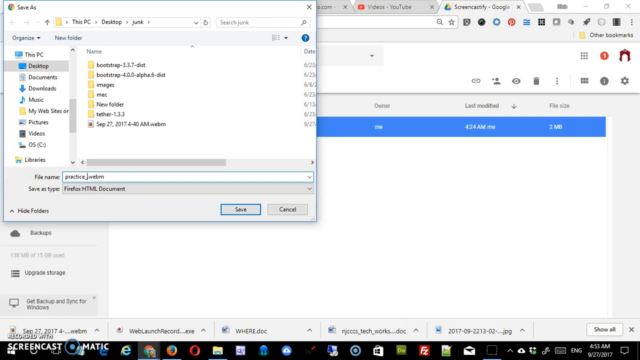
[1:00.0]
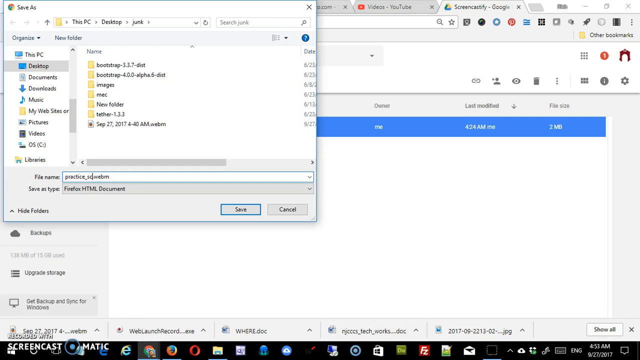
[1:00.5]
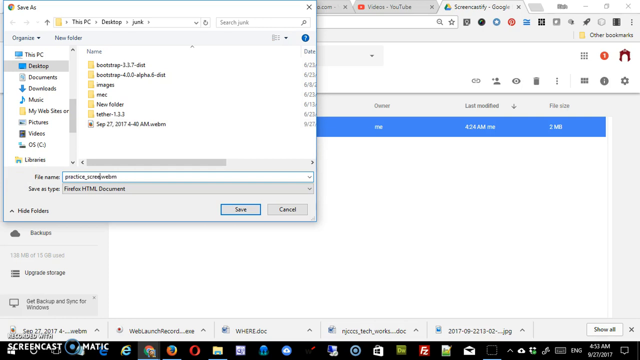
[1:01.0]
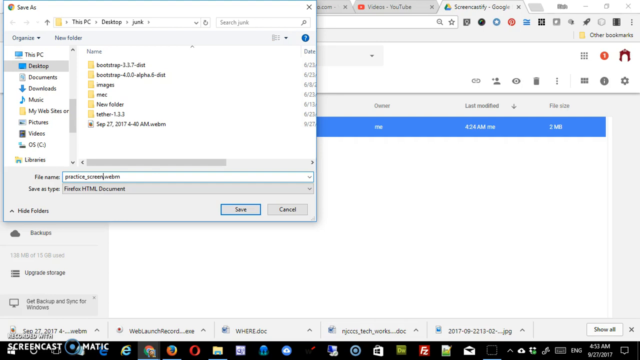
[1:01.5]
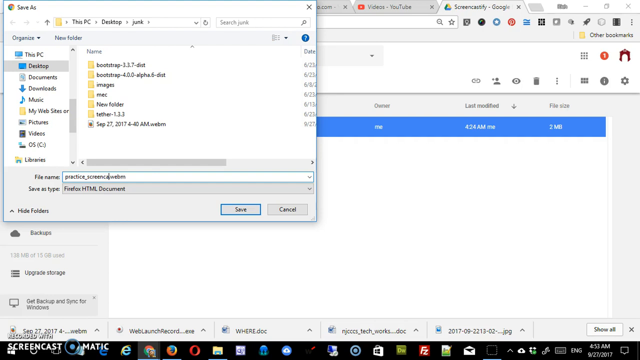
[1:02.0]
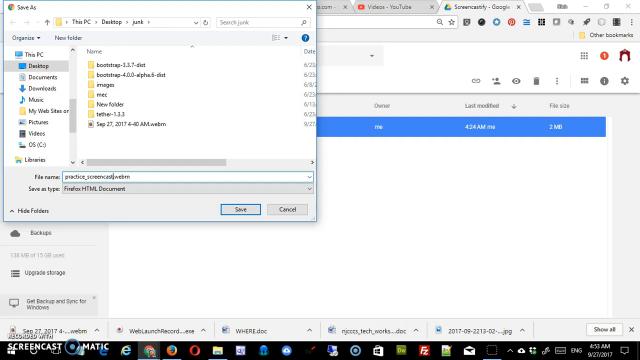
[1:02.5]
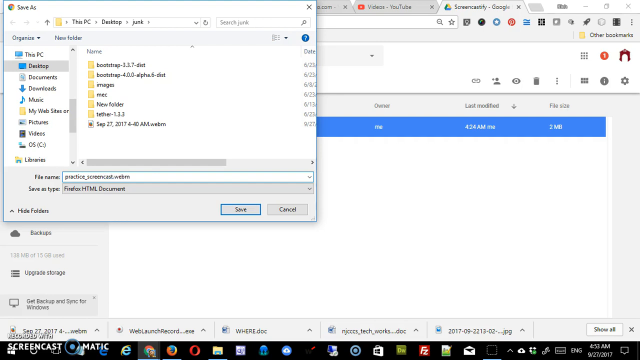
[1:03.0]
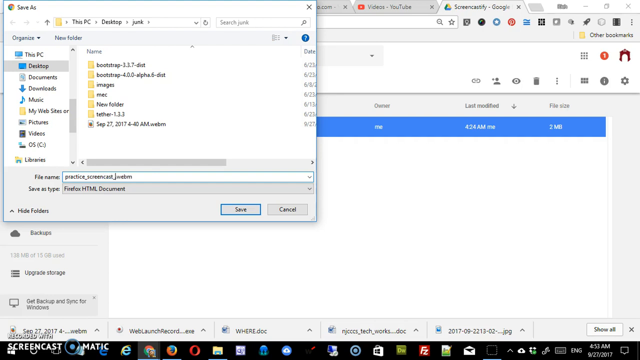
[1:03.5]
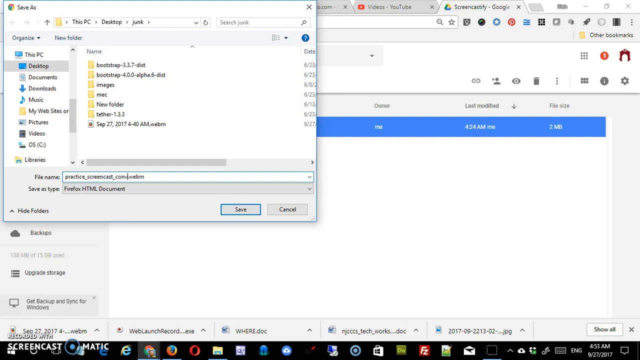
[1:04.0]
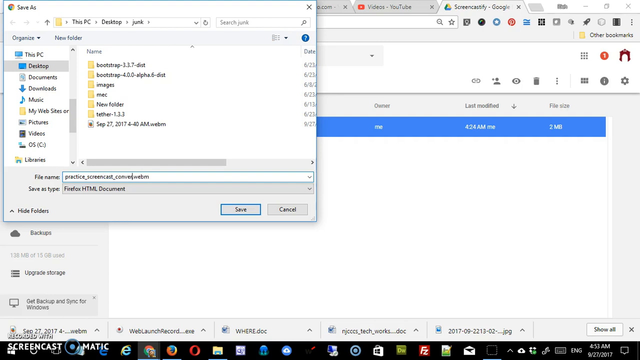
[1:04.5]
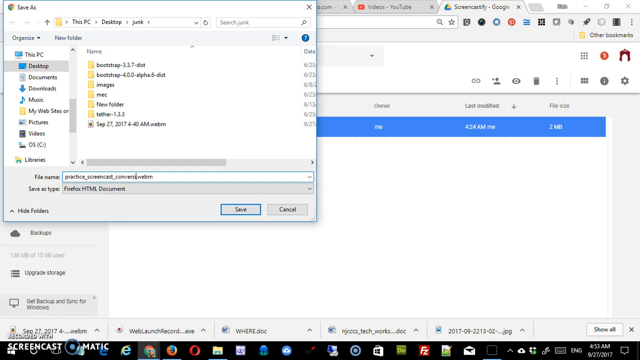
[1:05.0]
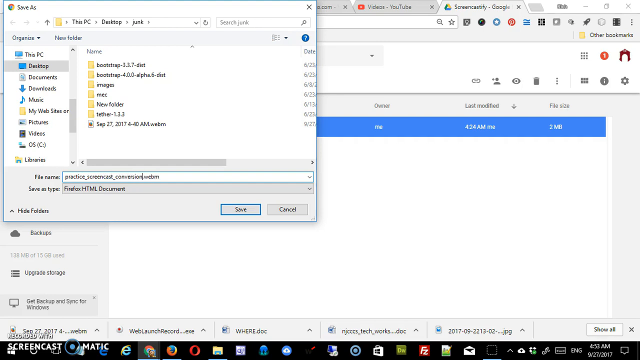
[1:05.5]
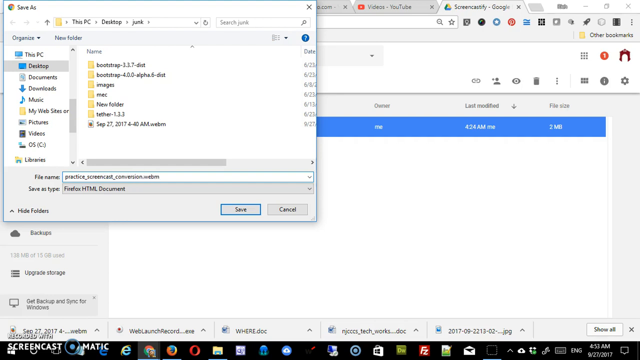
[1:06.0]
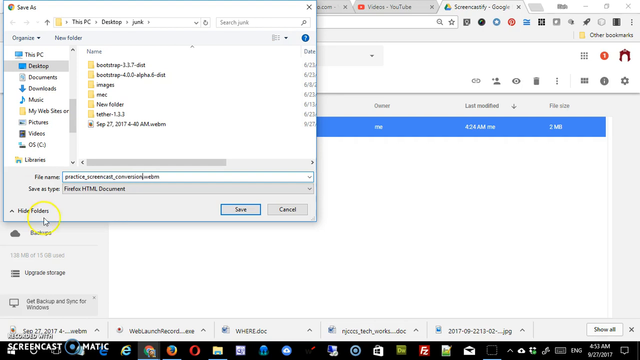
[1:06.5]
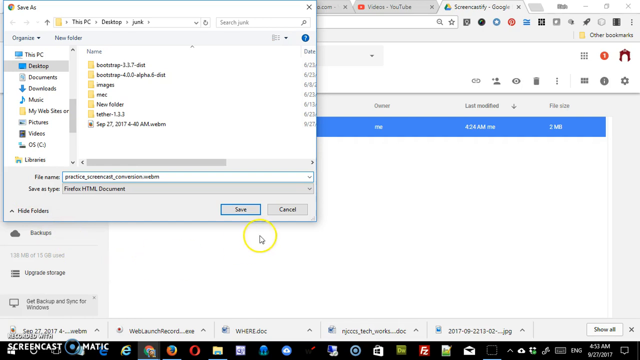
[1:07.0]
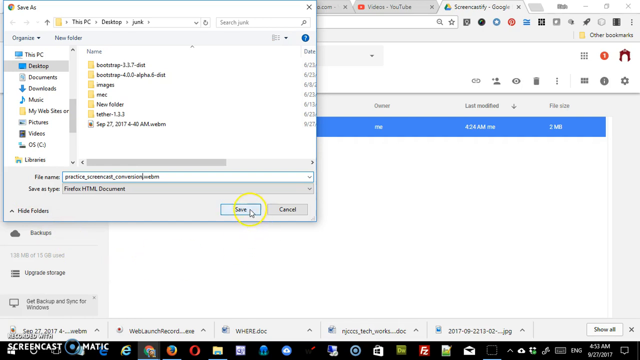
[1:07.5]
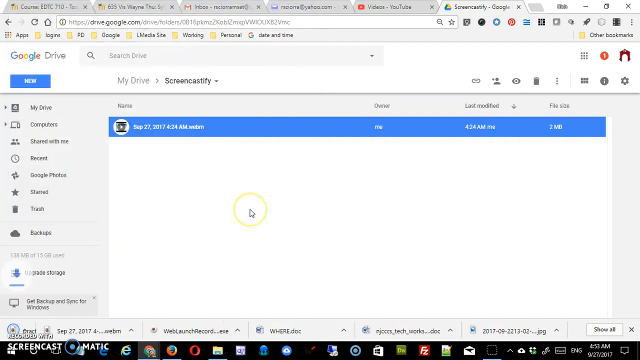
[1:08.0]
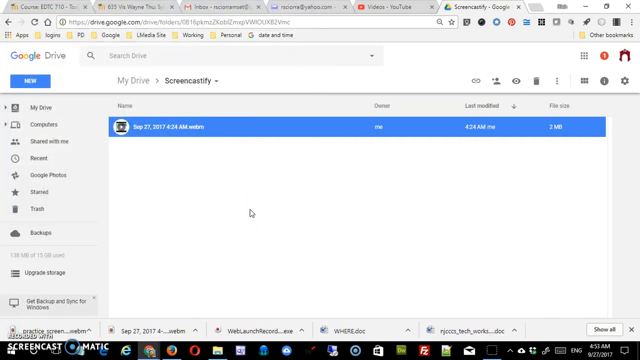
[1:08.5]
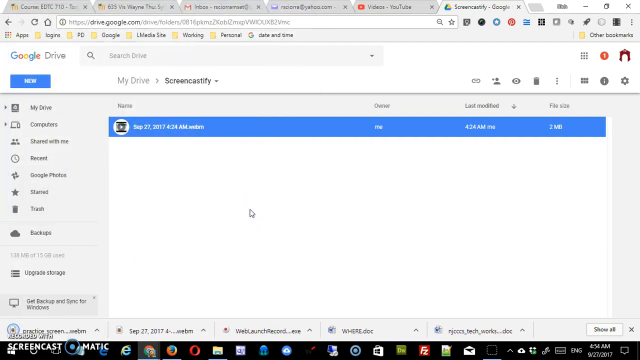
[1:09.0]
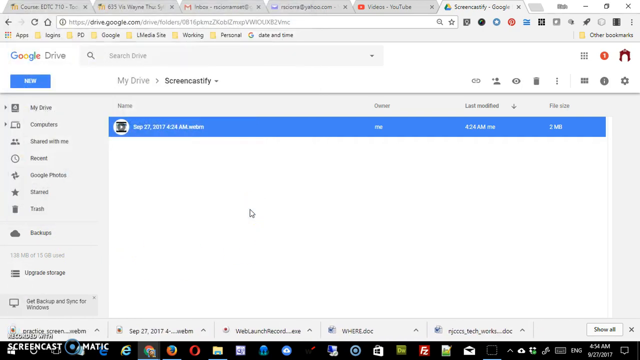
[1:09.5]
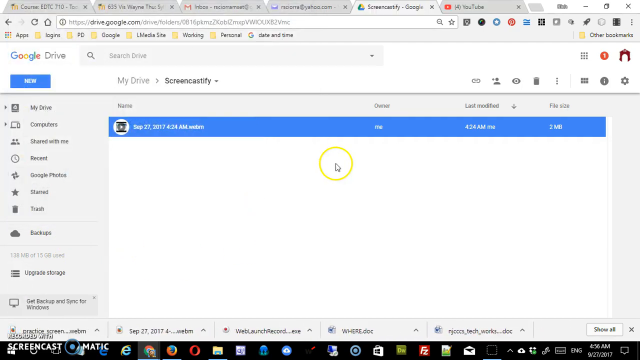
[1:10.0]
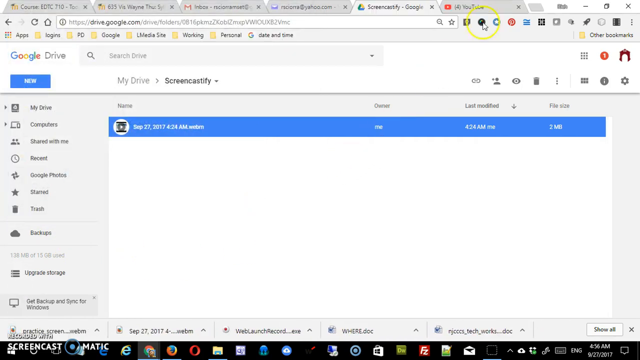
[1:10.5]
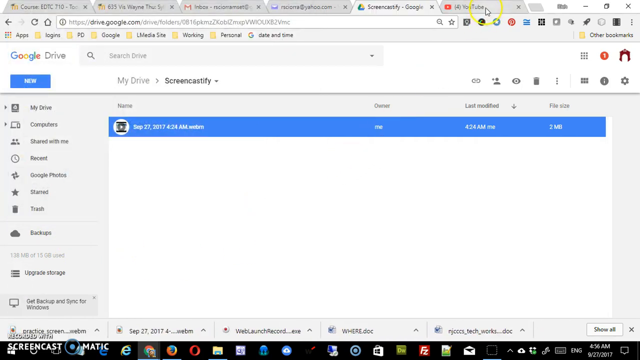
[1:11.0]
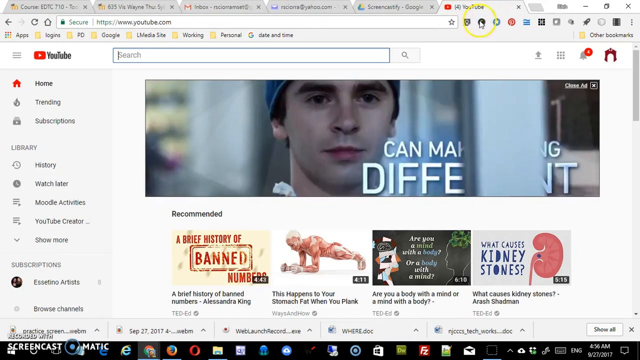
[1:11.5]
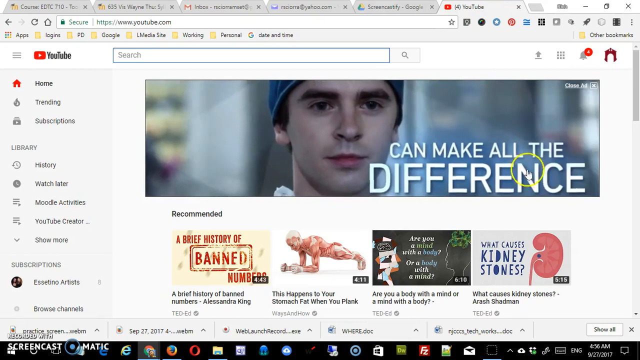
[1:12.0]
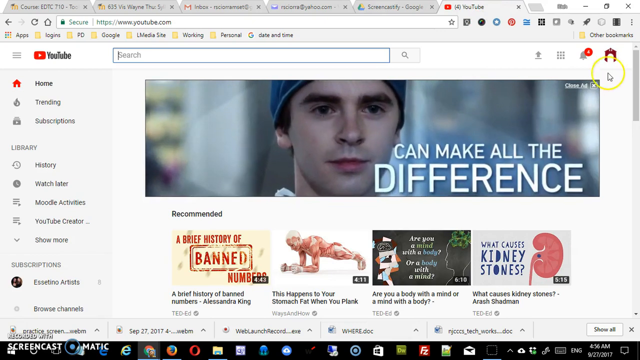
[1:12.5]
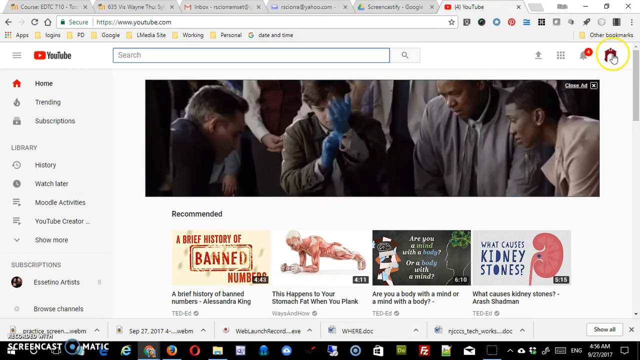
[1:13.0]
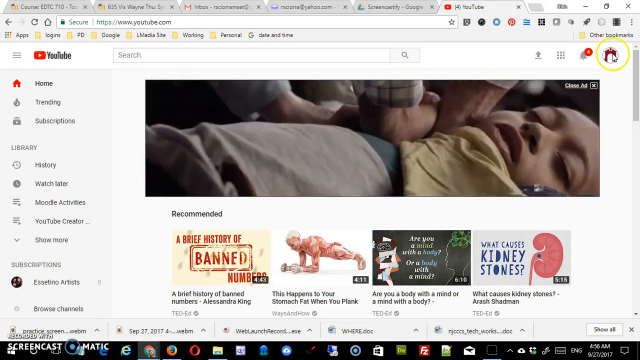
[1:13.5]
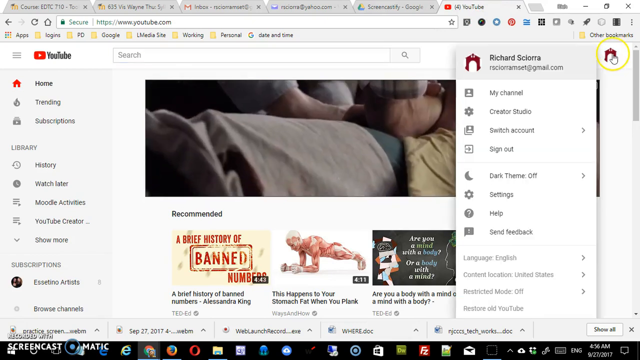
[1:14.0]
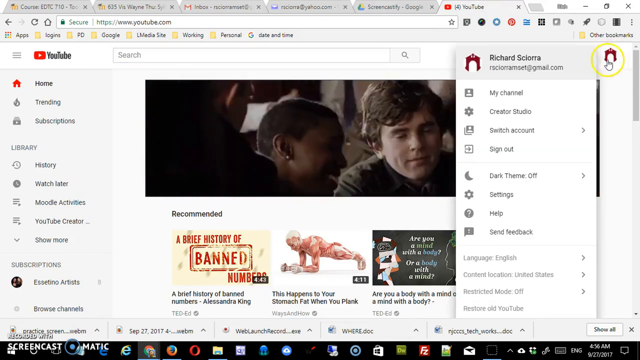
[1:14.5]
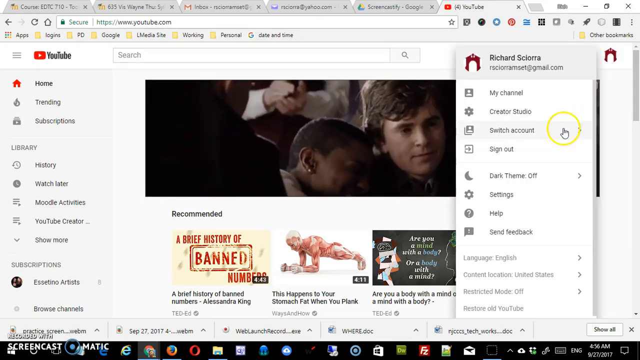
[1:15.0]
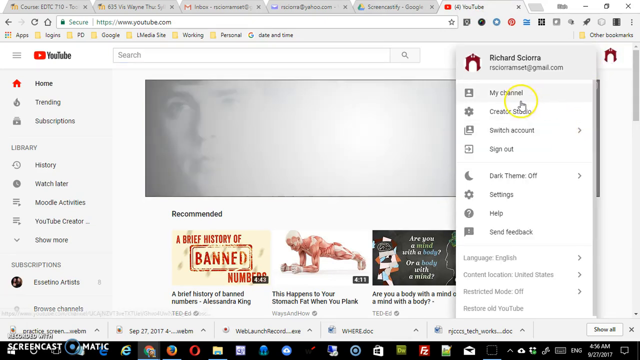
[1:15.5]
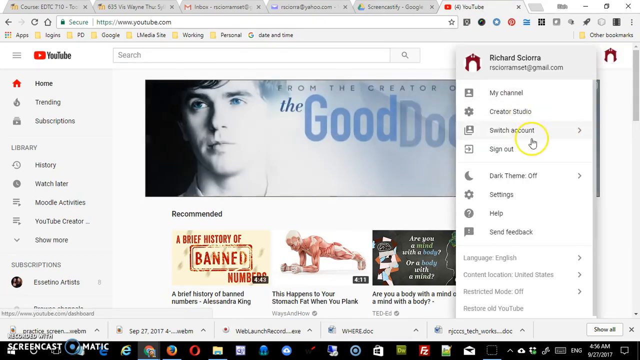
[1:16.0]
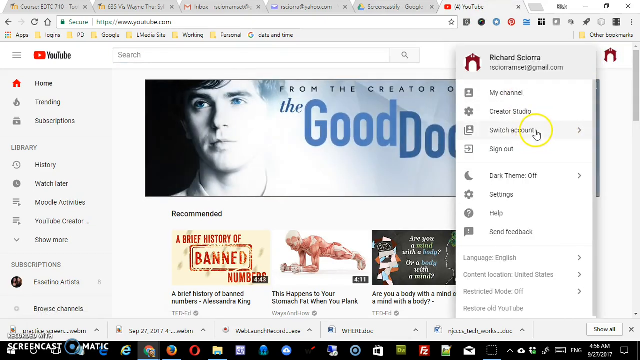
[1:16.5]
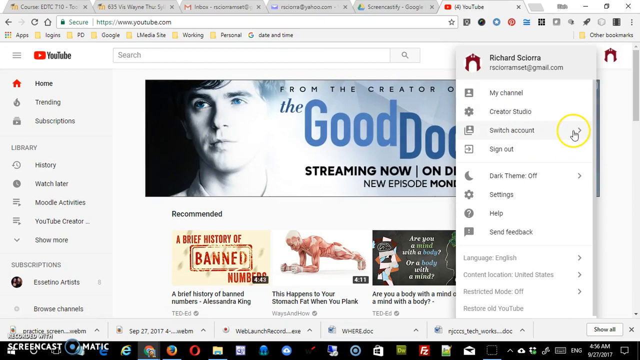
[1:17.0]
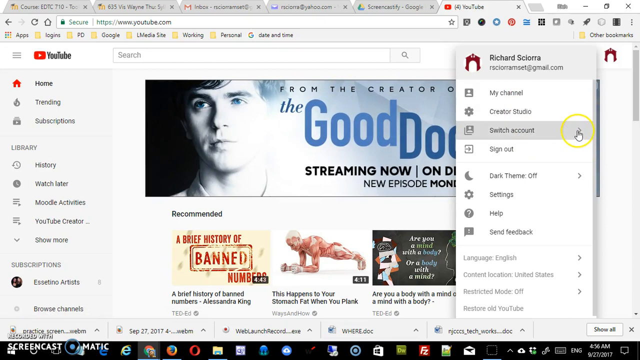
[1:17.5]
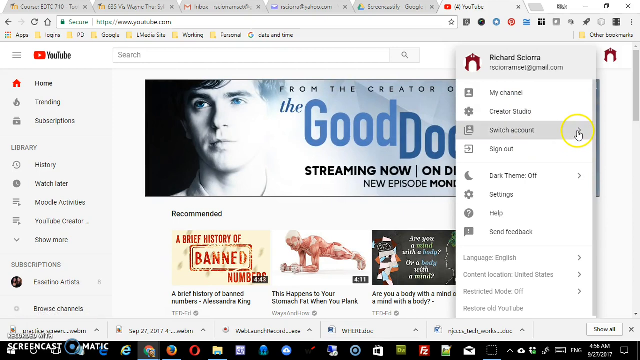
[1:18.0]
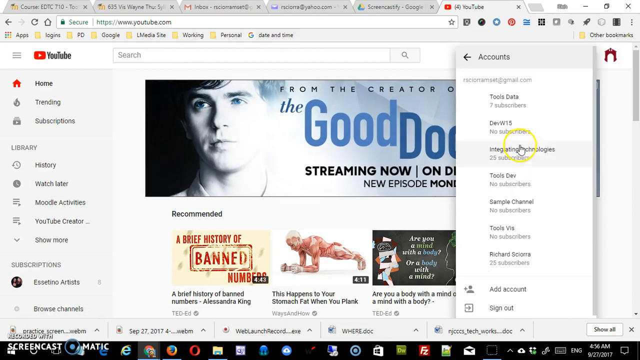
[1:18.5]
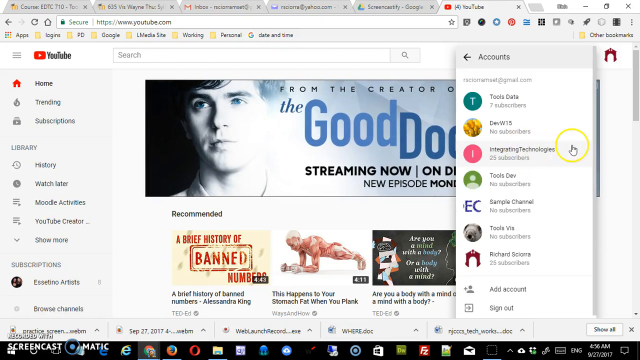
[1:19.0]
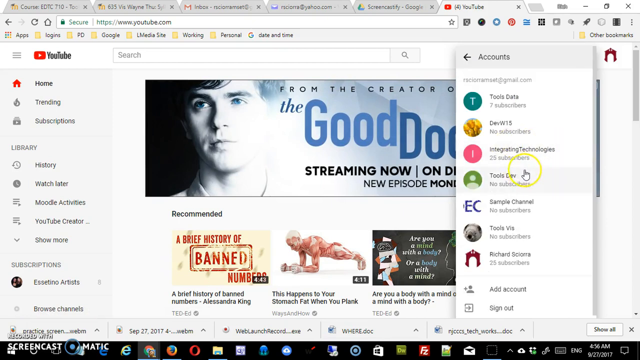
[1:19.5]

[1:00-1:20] A desktop appears with a window that has about eight or nine tabs open and a plain gray background. The person moves the mouse around the screen with a Save As folder open, saving a file from or to their Google Drive and zipping it as something else. The scene then changes and they flip through images on the side, where it says "Richard". Richard's folder has a few different things to click, and he clicks different images on the side of the folder that look like contacts or saved bookmarks. The menu he clicks through is made of small, colorful bubbles, one bubble design after another, similar to a phone interface.